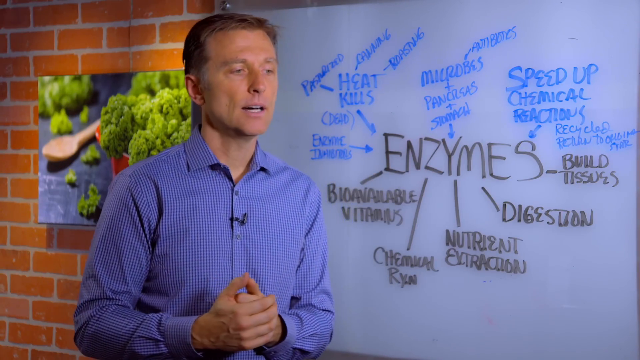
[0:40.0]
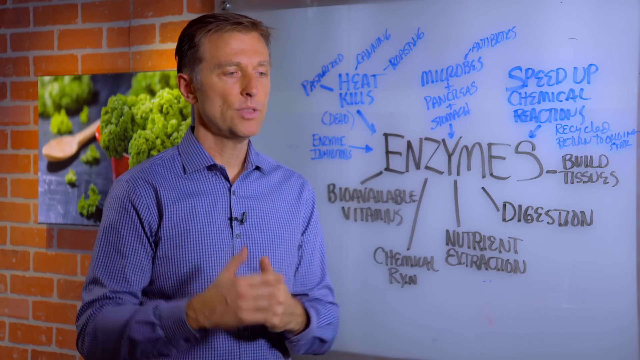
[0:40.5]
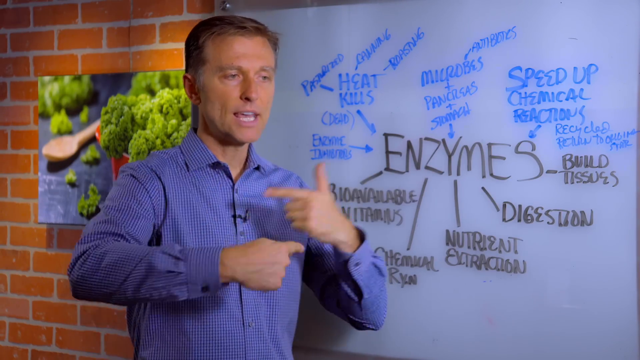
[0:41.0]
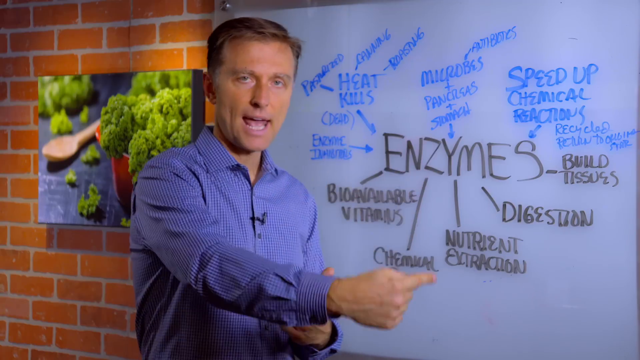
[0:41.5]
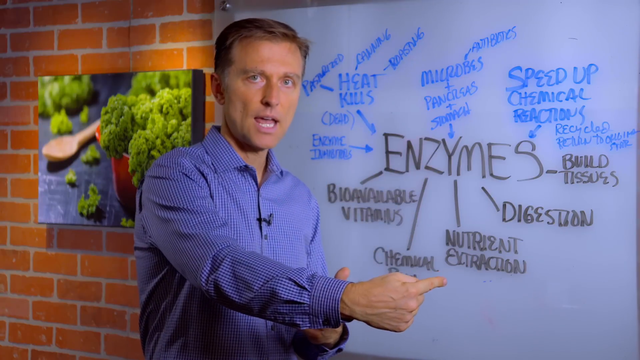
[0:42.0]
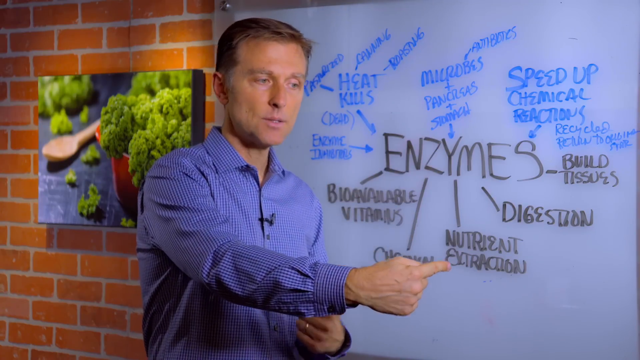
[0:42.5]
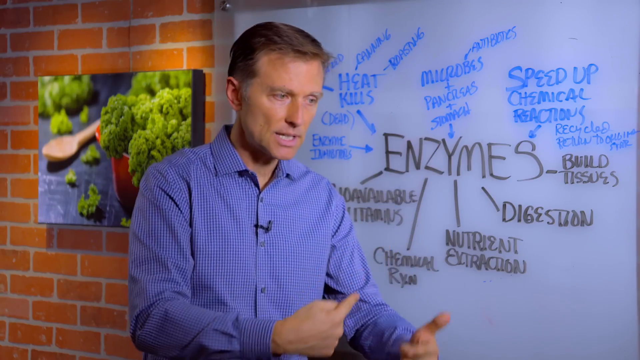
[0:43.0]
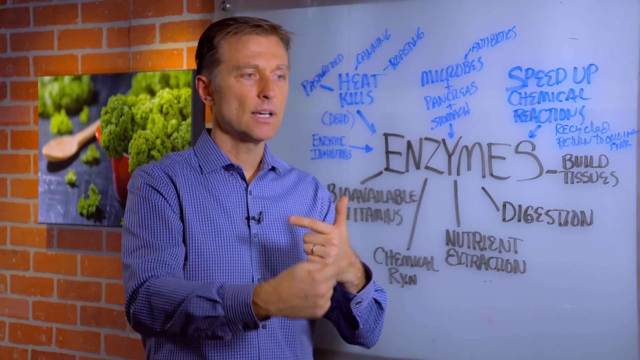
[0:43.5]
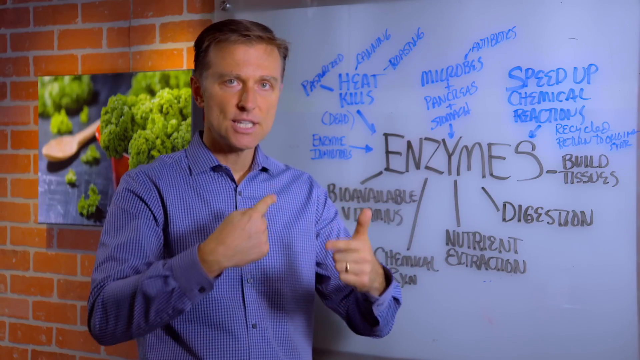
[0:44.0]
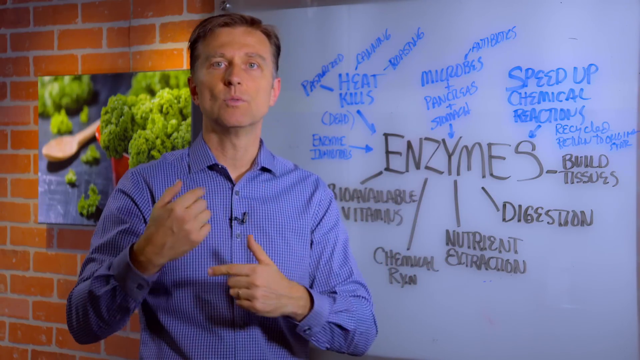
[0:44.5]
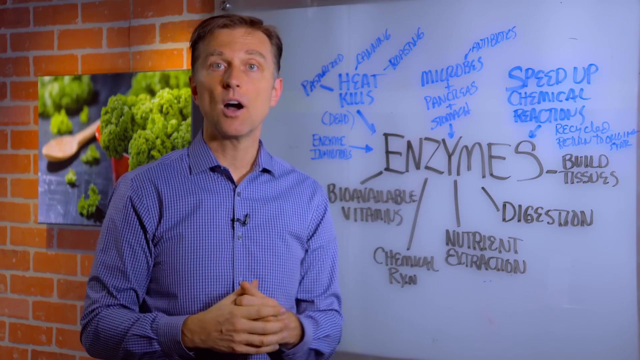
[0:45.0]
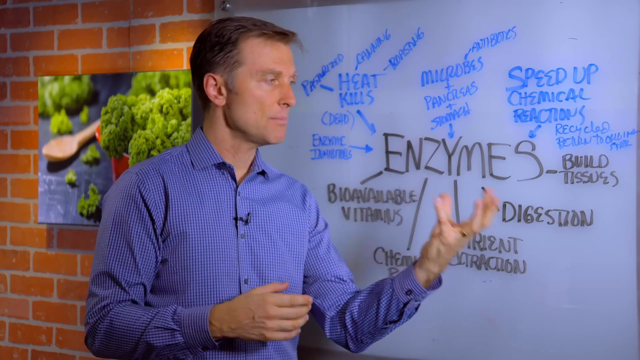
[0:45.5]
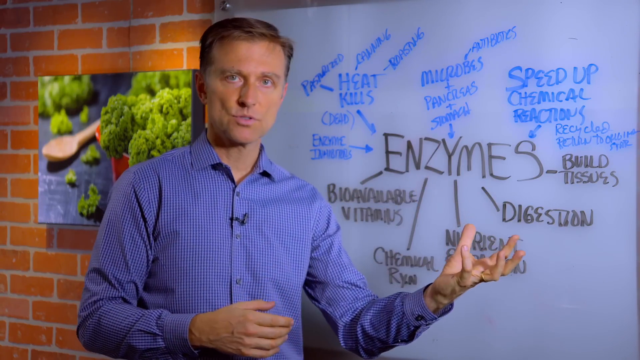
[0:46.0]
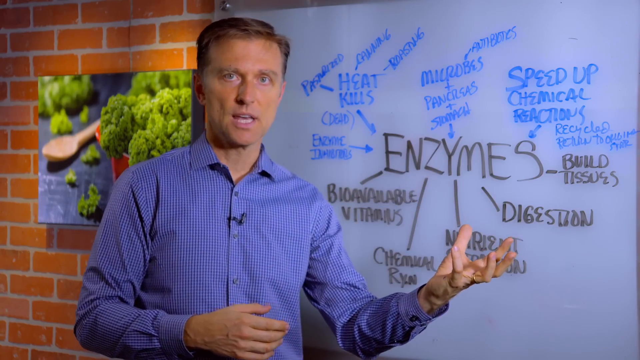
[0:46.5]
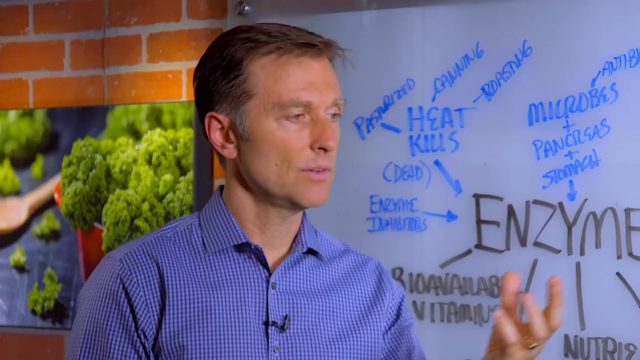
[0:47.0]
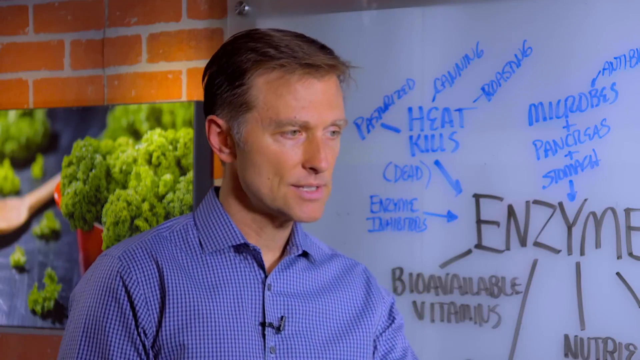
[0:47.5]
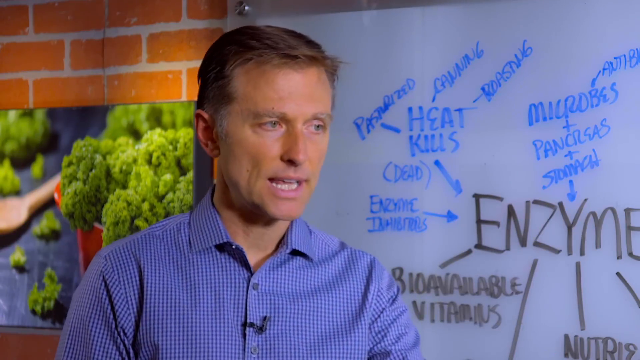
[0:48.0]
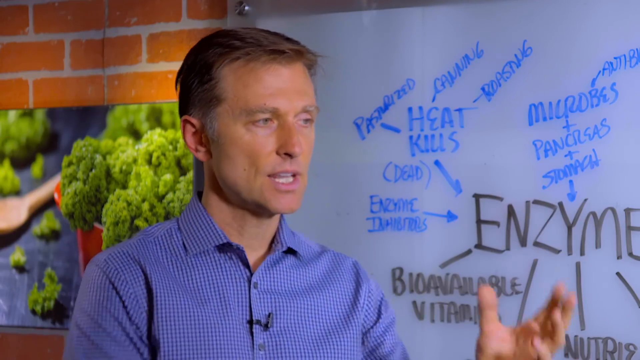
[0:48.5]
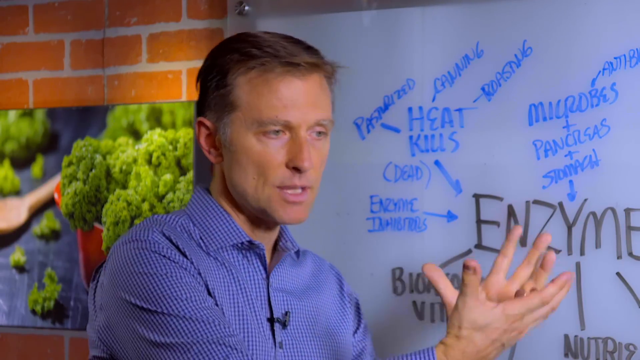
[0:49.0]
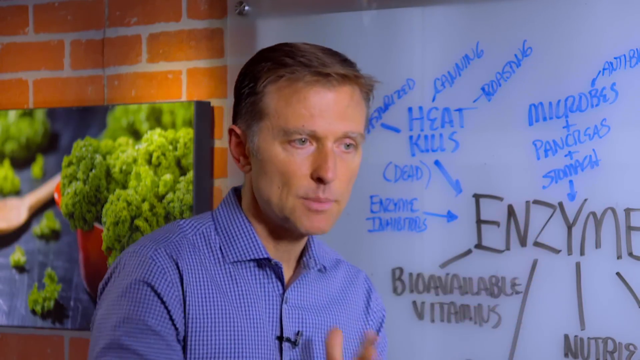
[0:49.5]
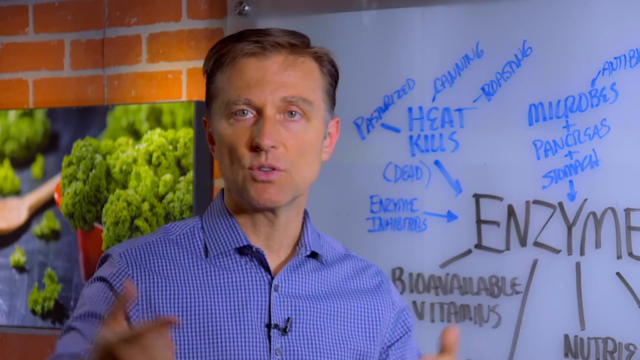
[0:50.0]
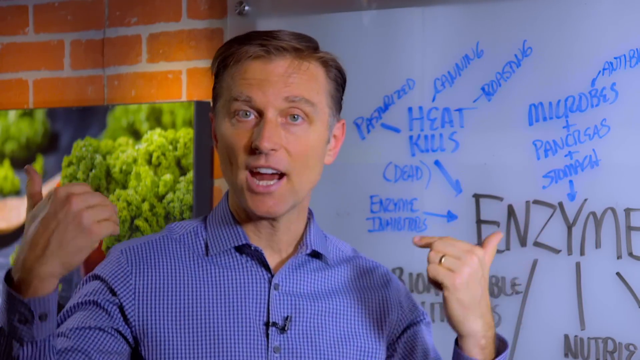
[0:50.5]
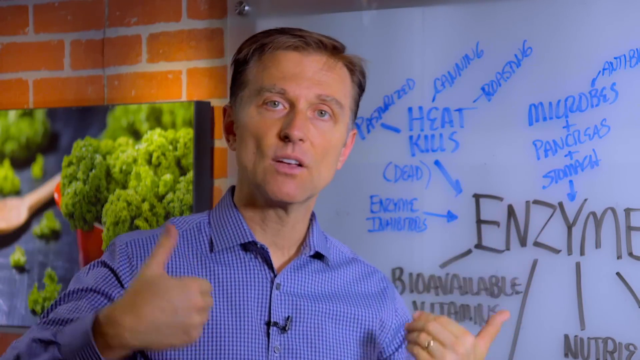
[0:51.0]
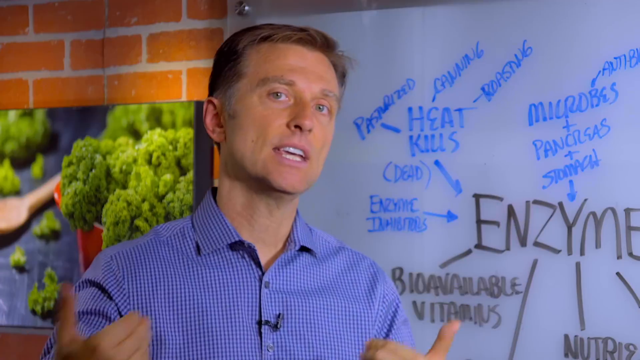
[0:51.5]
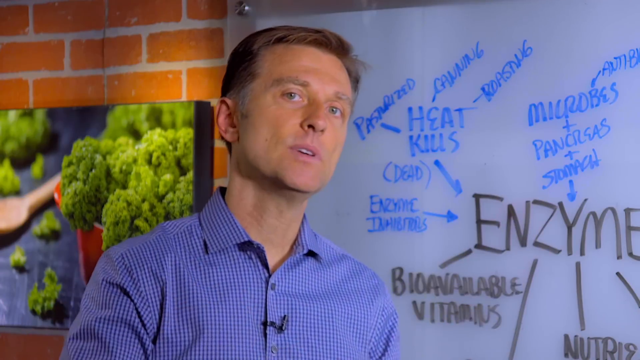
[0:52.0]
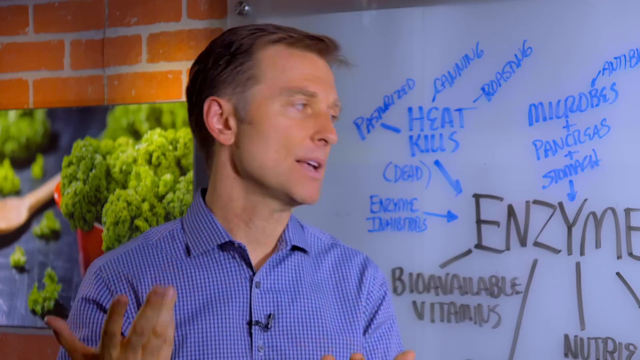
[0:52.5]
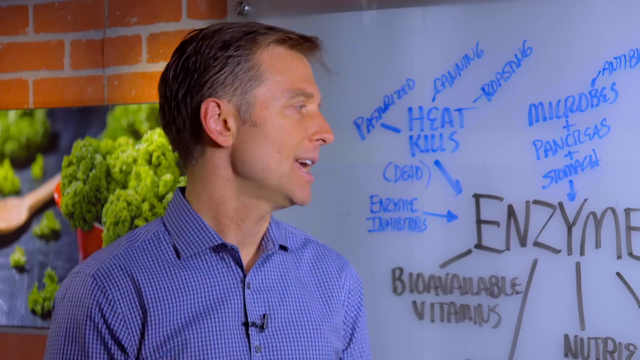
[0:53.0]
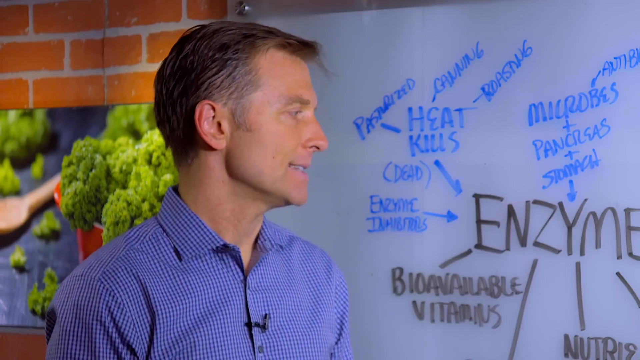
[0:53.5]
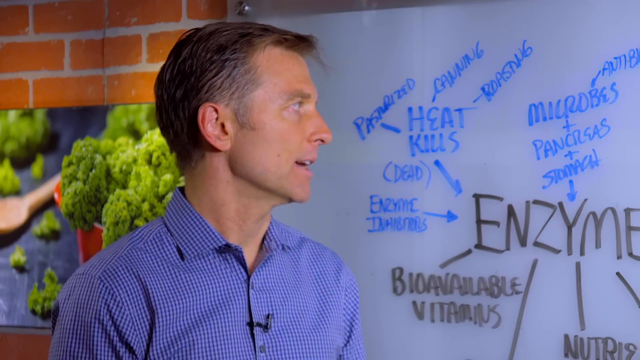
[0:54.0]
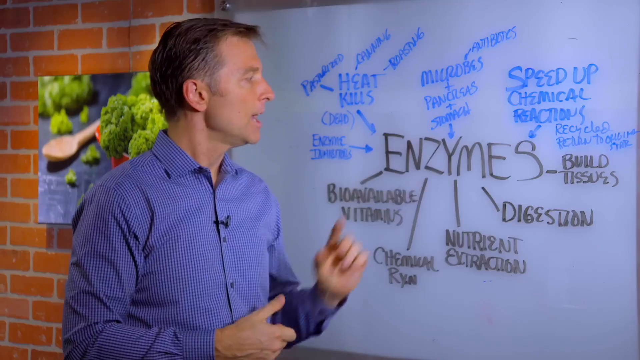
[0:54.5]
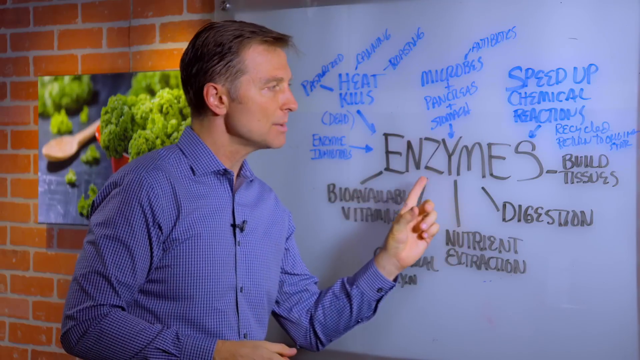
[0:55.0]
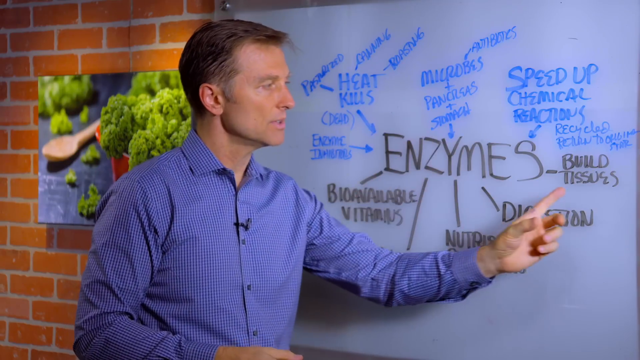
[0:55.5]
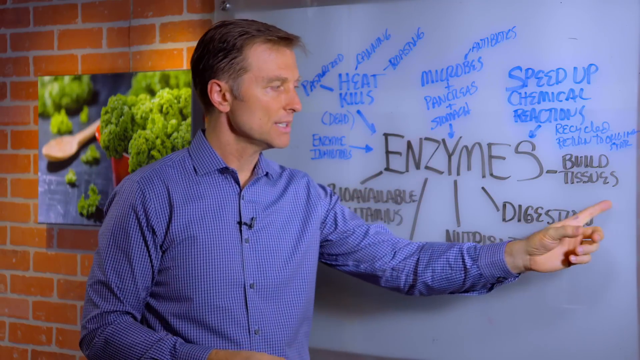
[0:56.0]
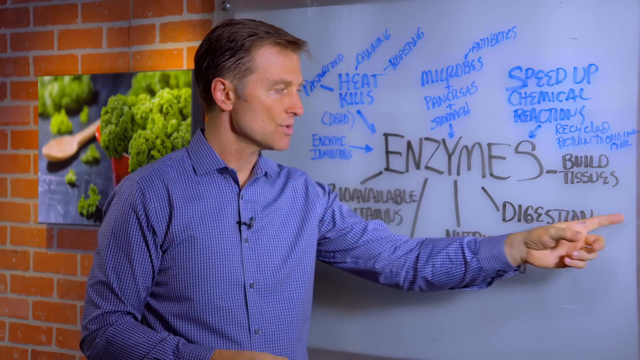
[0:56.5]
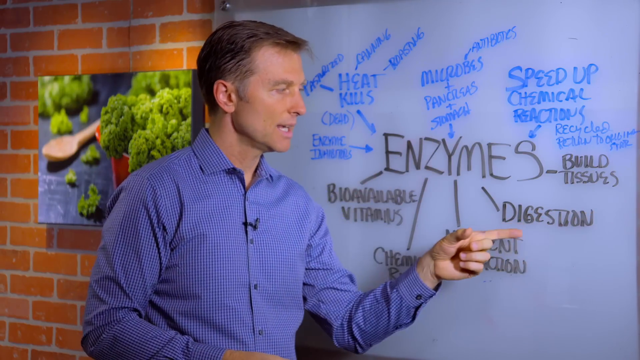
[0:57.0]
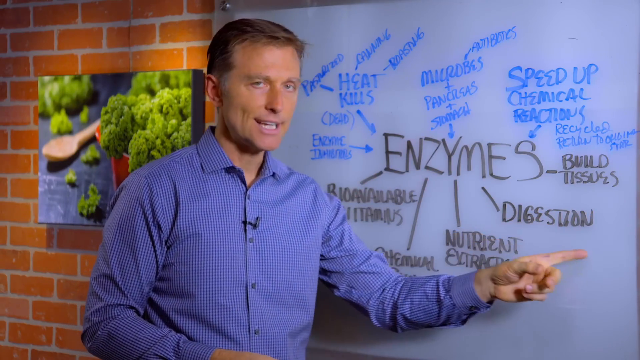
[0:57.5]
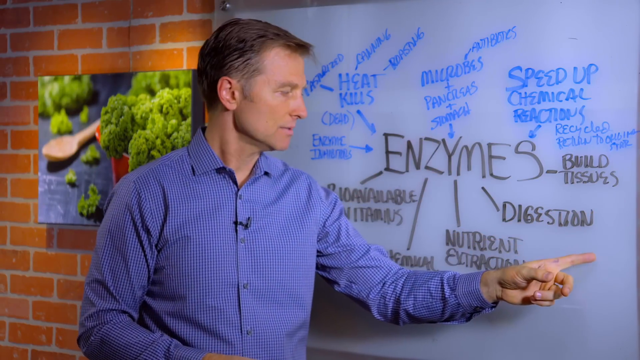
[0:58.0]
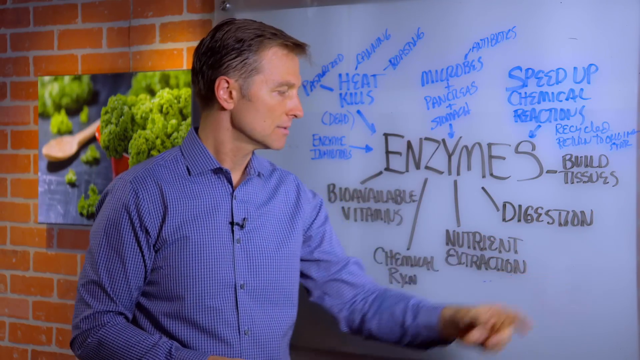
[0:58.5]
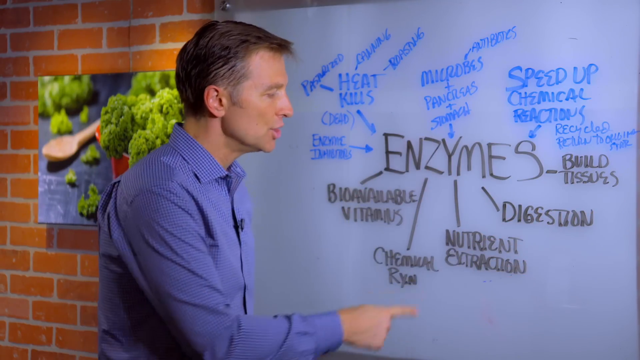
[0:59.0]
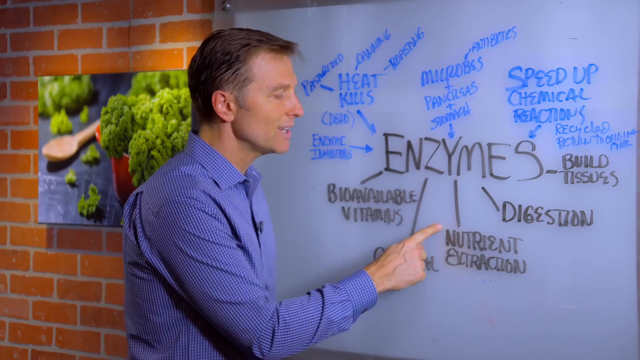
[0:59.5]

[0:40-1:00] The man's hands seem to point to something going forward and then coming back, as if in some kind of cycle. He points toward the board again and moves his hands as if describing a step-by-step process.